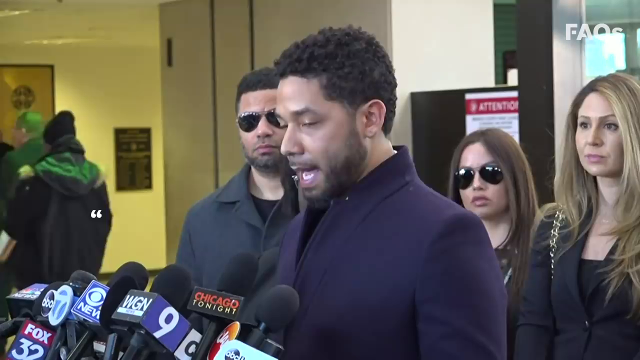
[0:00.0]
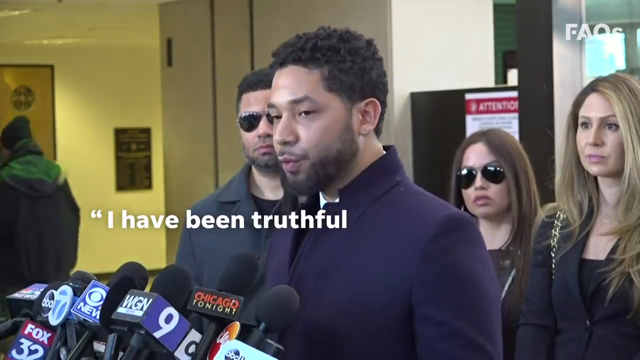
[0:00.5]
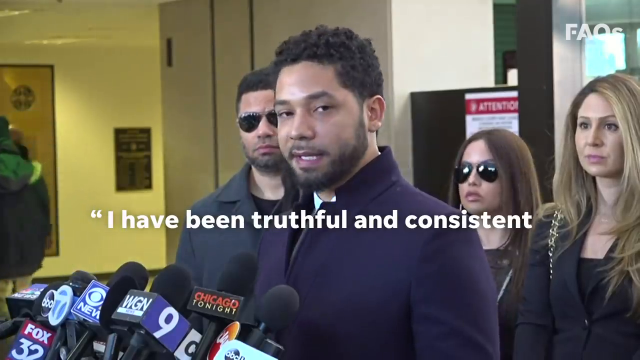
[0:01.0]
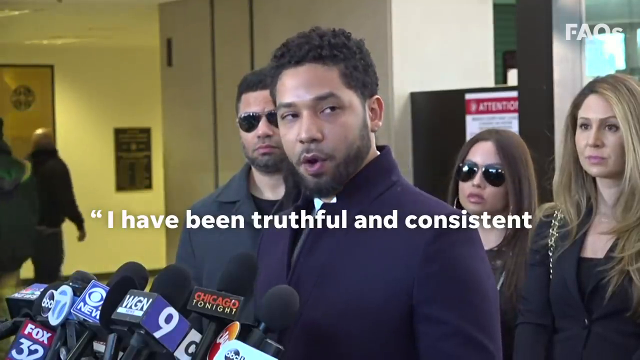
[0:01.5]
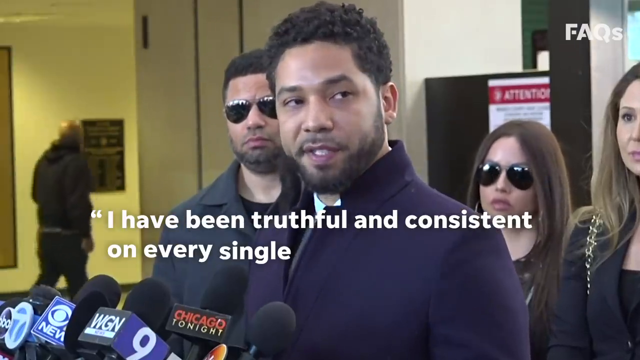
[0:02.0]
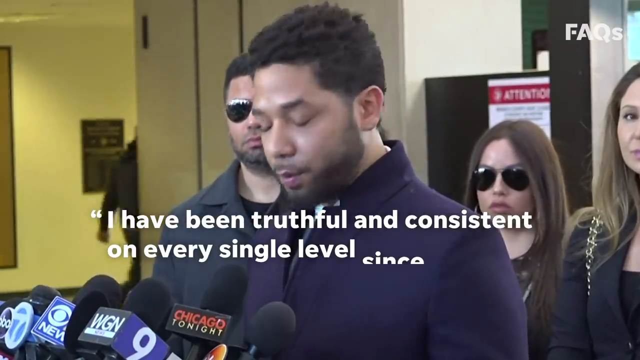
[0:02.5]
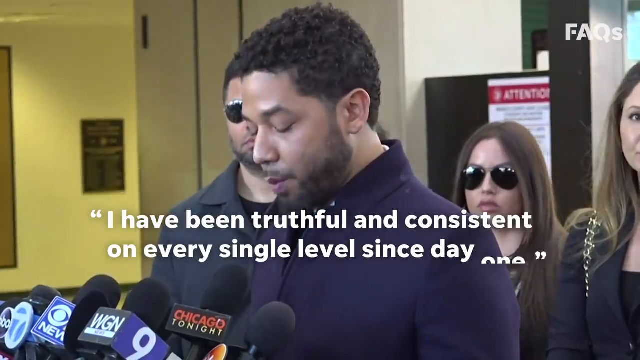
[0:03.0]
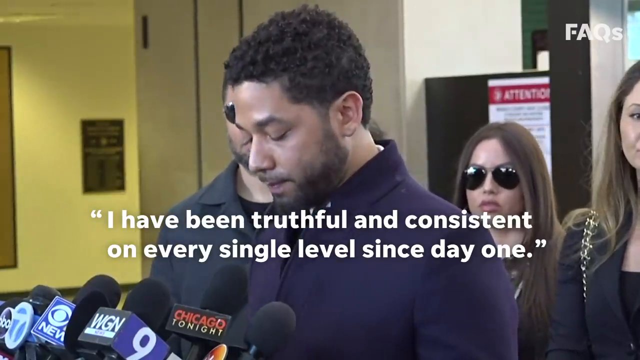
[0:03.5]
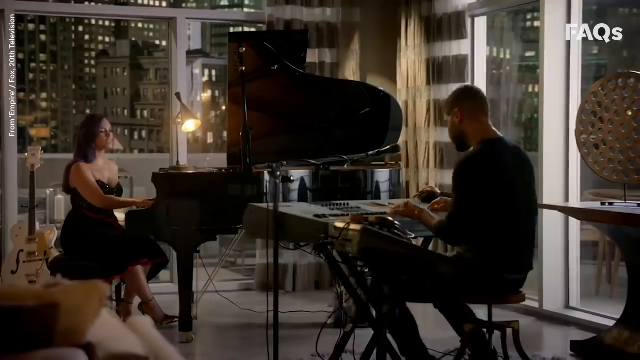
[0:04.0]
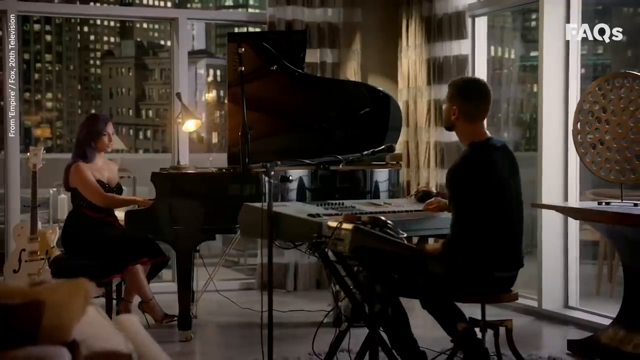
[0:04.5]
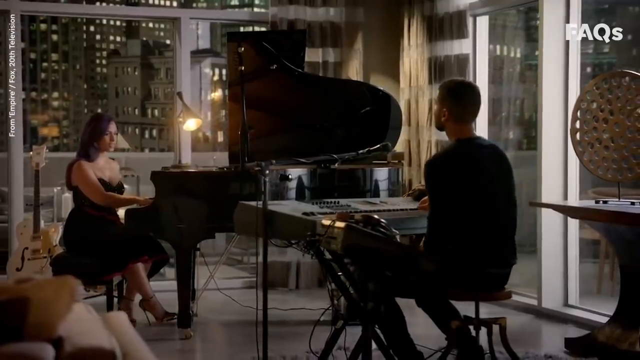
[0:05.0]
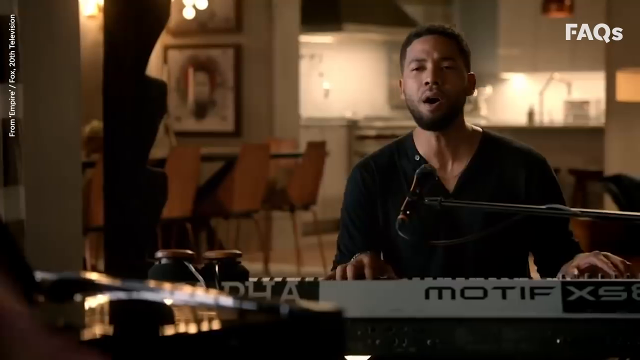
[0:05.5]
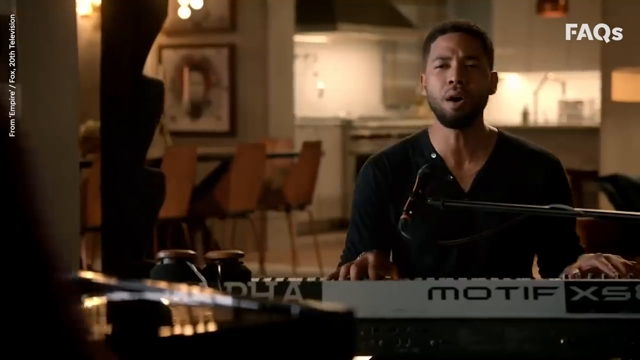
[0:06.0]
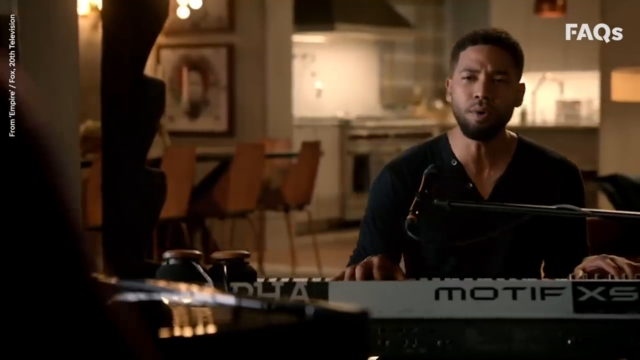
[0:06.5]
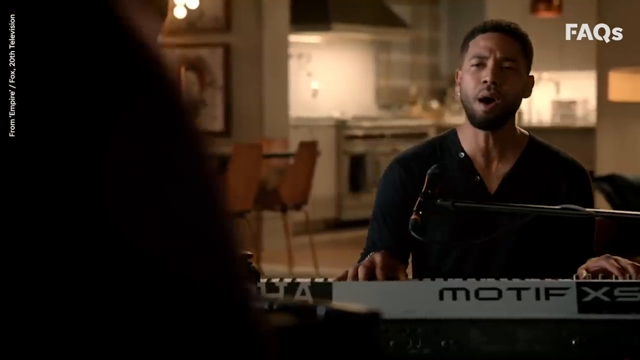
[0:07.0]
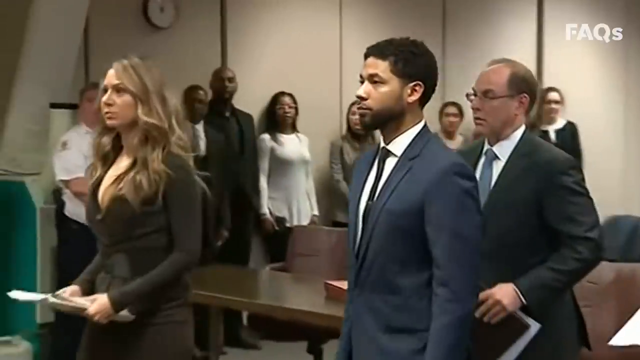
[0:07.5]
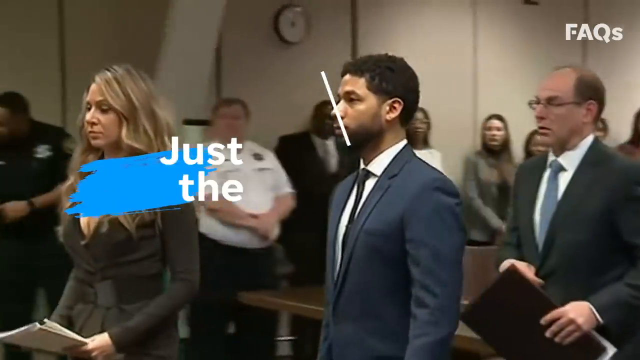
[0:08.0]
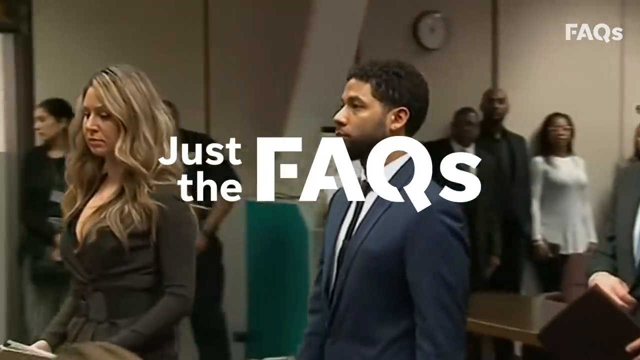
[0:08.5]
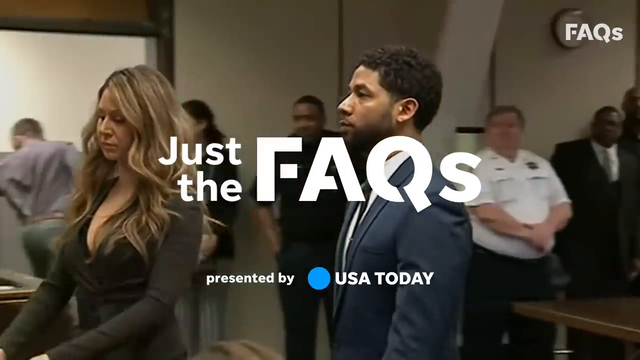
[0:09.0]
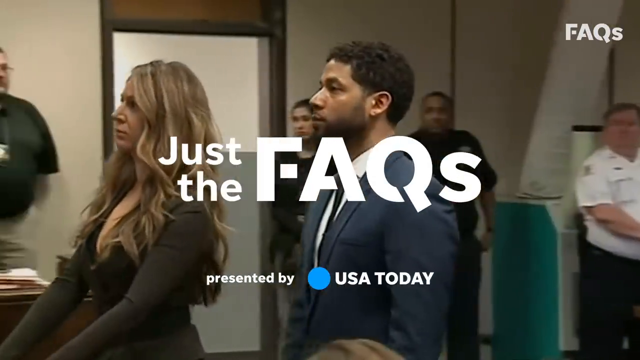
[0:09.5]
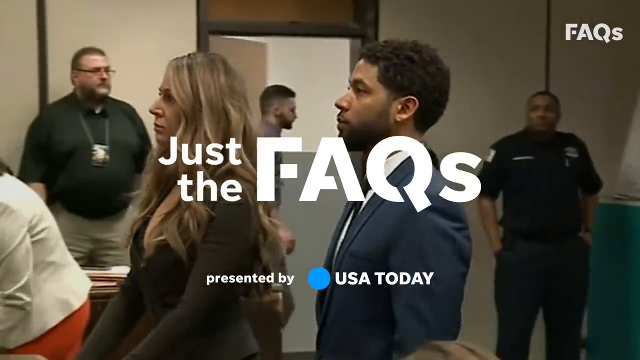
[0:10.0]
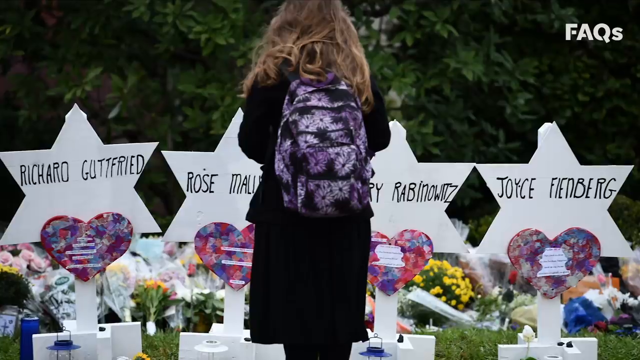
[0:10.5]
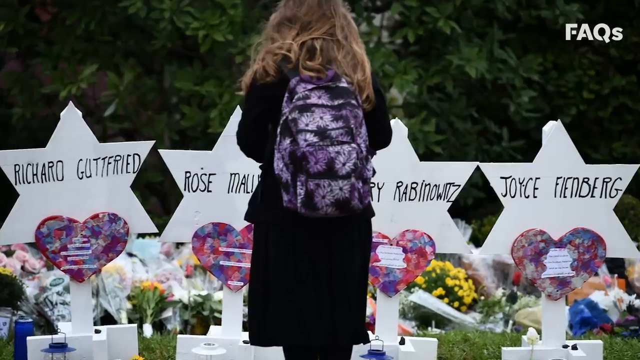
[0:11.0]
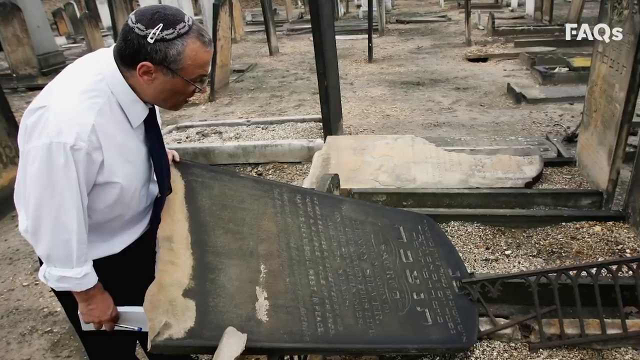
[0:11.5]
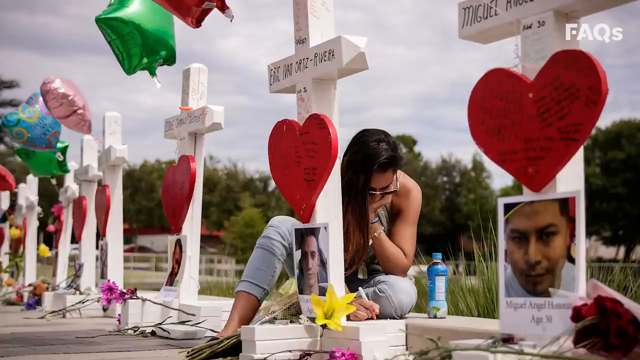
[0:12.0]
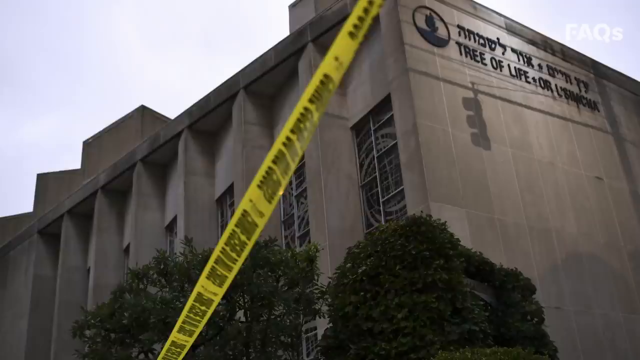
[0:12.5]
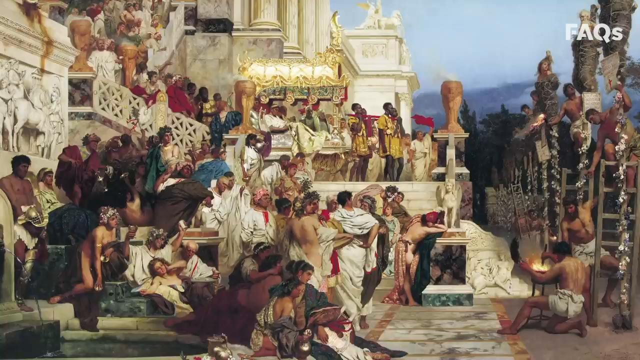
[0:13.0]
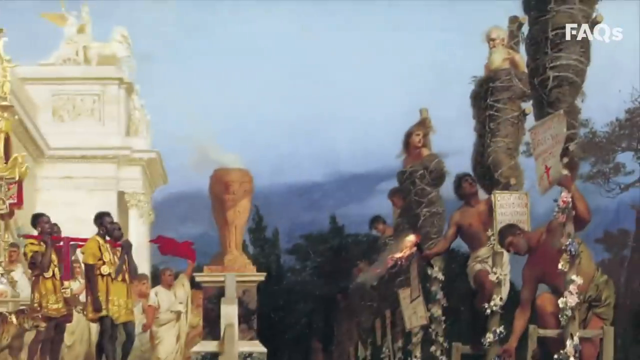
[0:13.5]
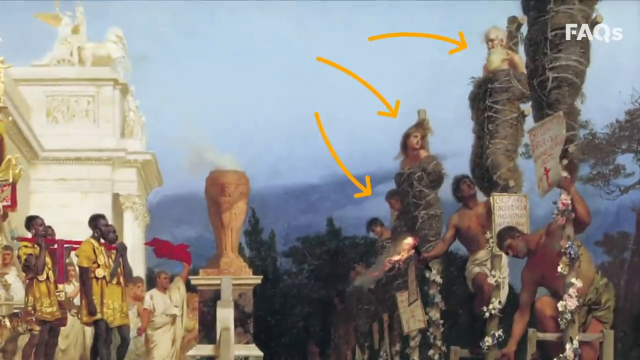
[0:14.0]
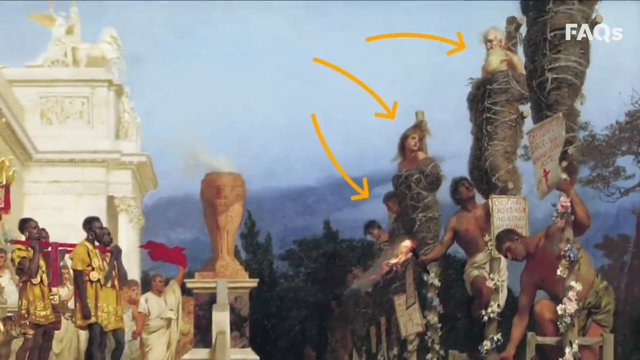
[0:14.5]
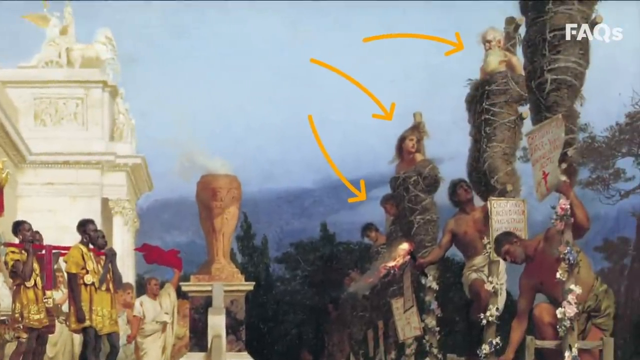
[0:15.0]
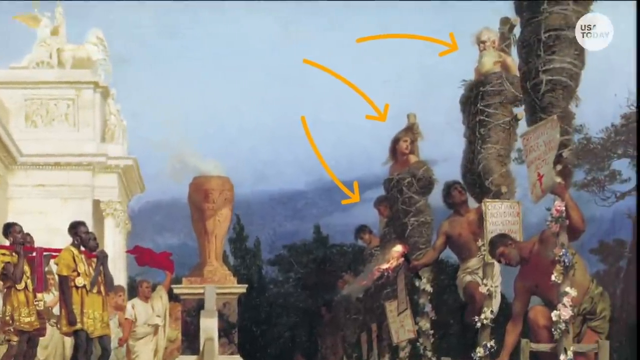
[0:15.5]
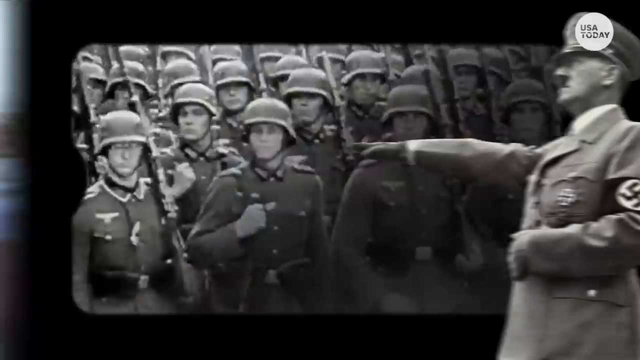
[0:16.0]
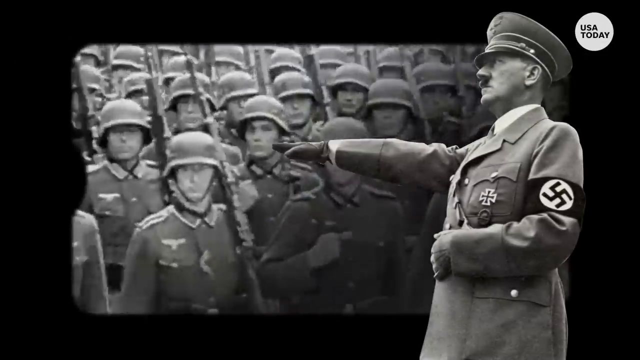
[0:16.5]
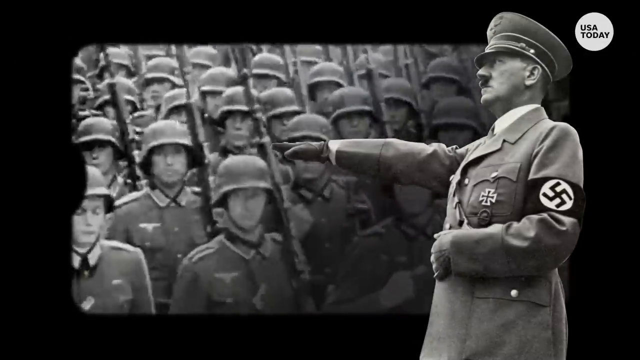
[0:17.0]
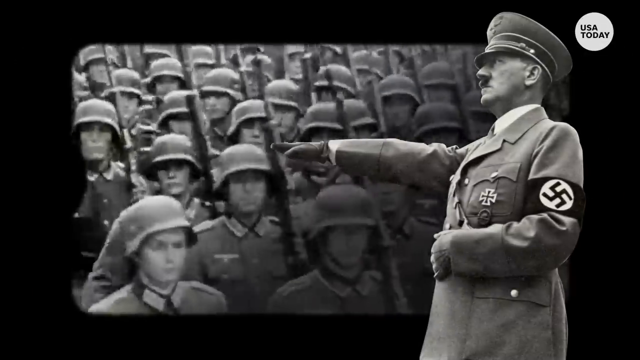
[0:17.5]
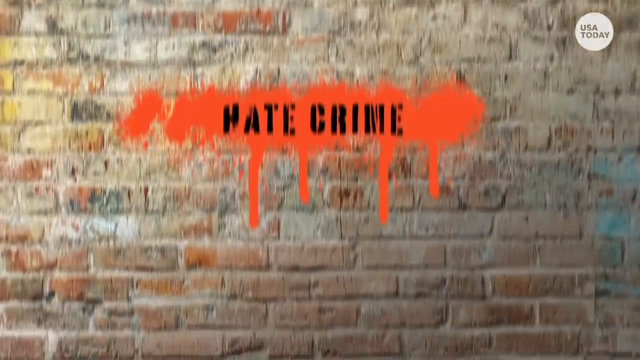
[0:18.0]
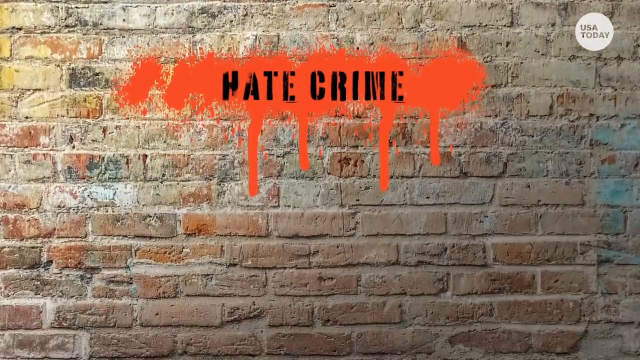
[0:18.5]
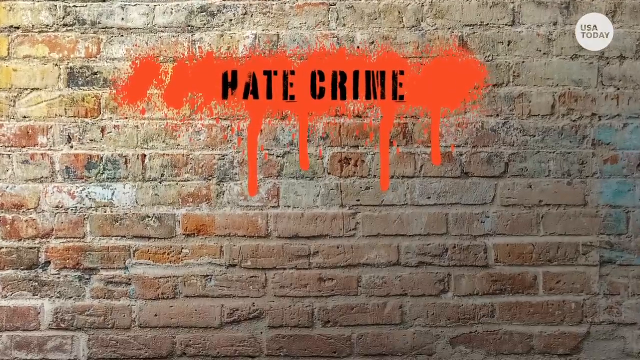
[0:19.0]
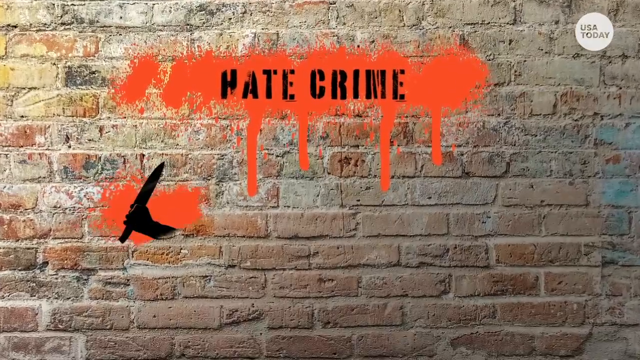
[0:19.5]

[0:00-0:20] A young black man gives a press conference, with a number of microphones lined up in front of him as he speaks, apparently from a number of reporters. In the background, people look on with serious, steady faces, paying attention. Subtitles on the screen read: "I have been truthful and consistent on every single level since day one." The young man is then seated at a piano, singing and playing, and with him is a white woman dressed in formal wear. She is also at a piano and seems to be singing. A number of high-rise buildings are in the background, suggesting an urban setting, and there are a number of musical instruments in the room. The video then transitions to the young man walking in what appears to be a courtroom.